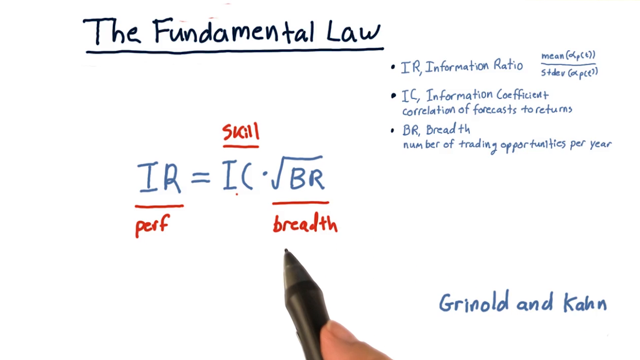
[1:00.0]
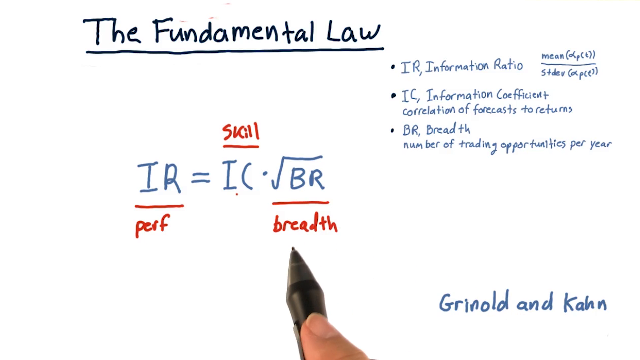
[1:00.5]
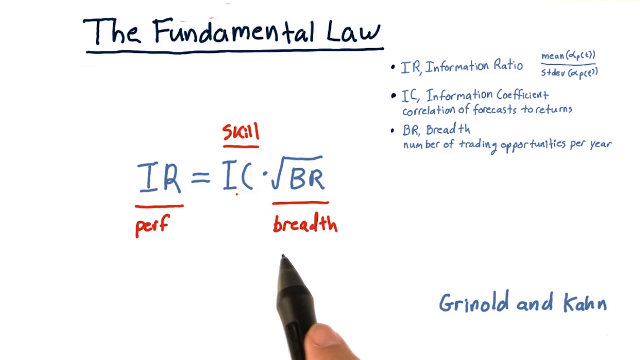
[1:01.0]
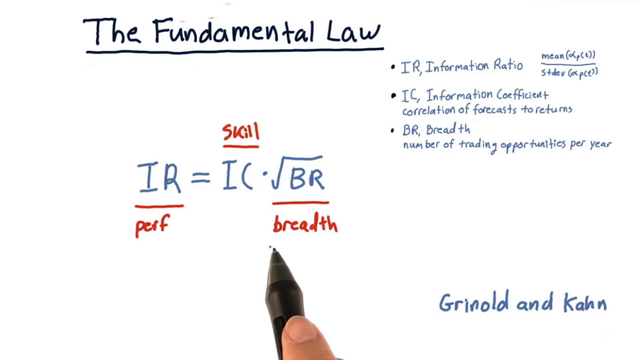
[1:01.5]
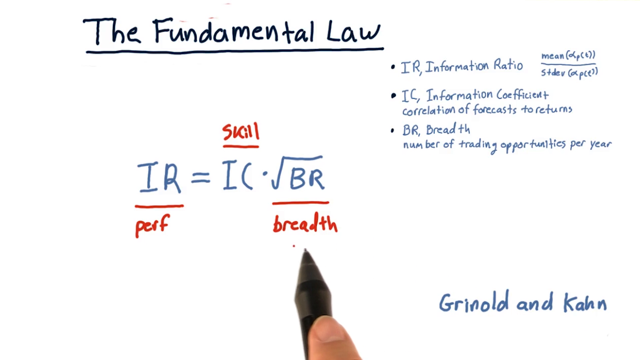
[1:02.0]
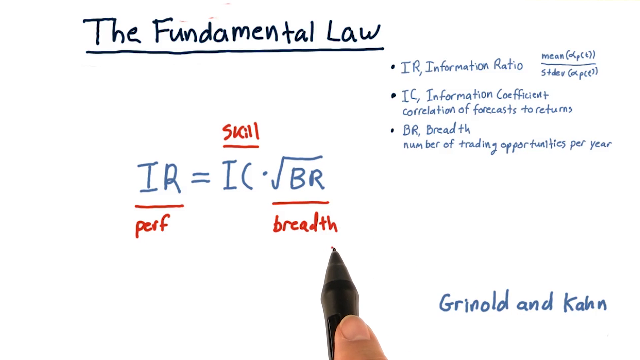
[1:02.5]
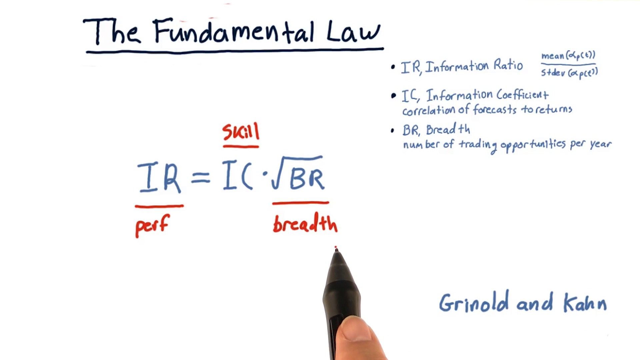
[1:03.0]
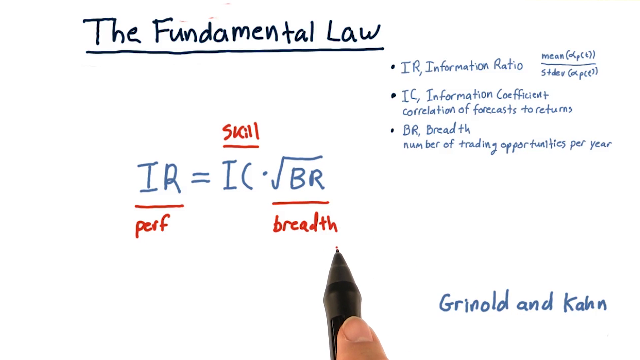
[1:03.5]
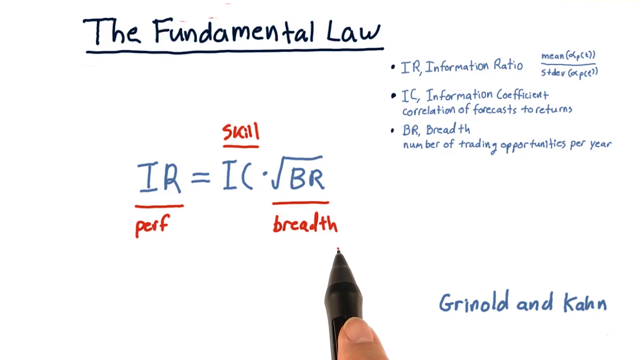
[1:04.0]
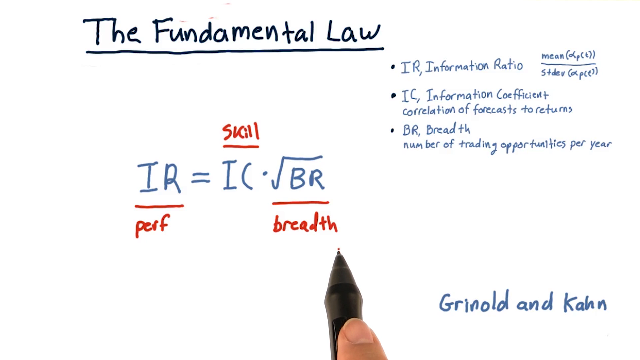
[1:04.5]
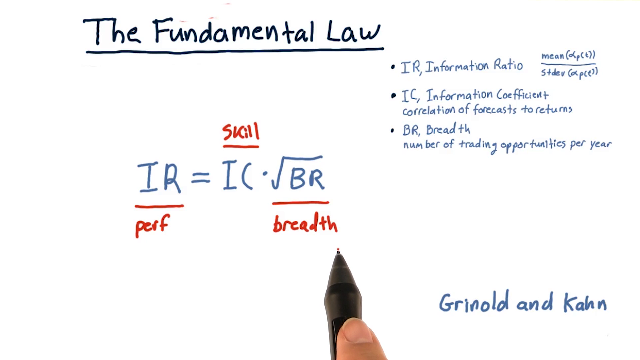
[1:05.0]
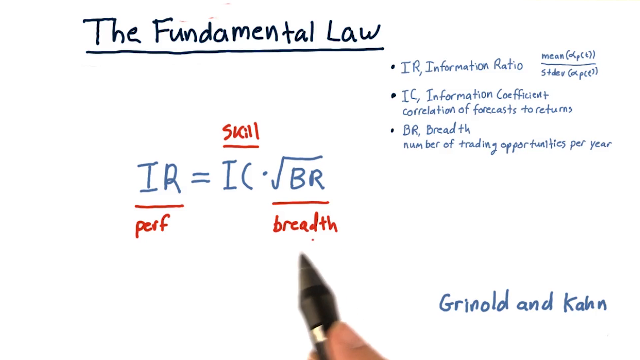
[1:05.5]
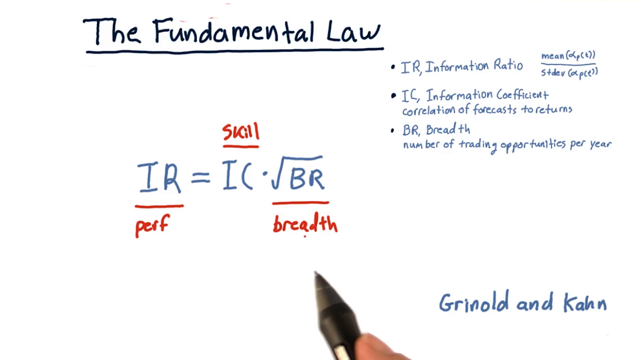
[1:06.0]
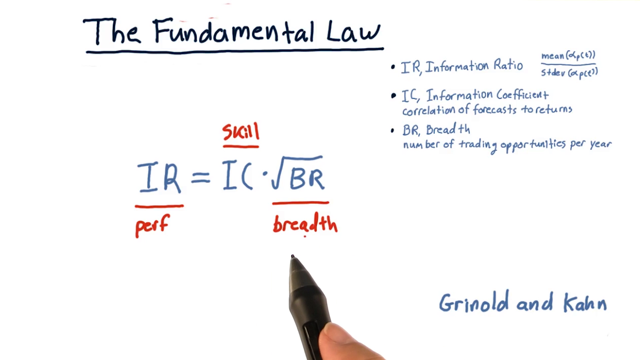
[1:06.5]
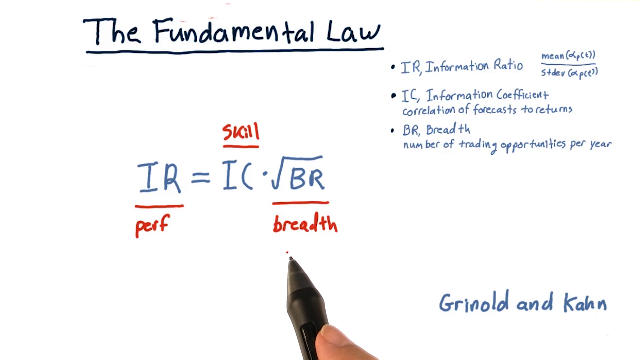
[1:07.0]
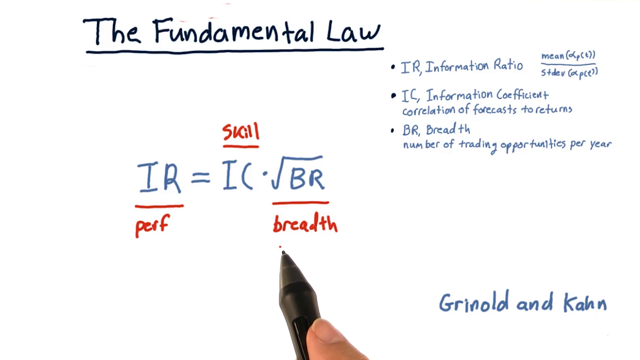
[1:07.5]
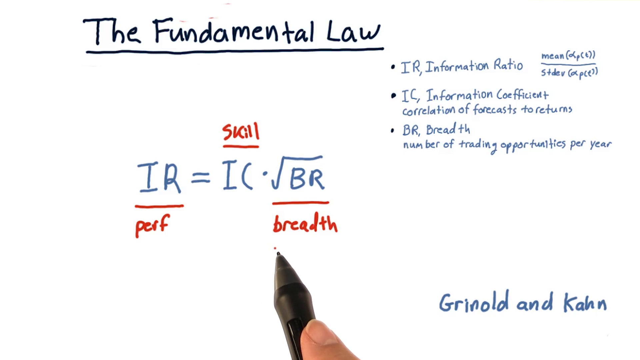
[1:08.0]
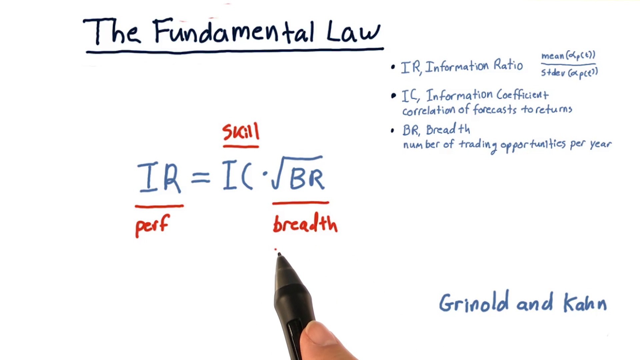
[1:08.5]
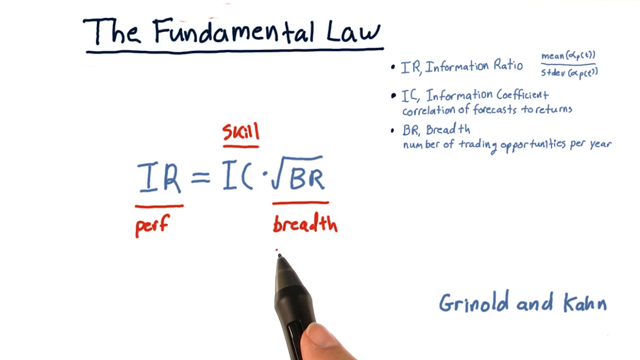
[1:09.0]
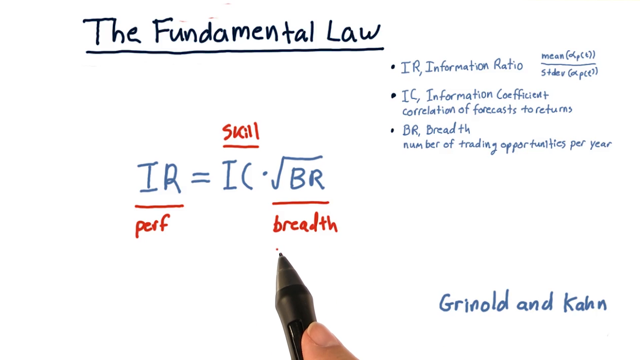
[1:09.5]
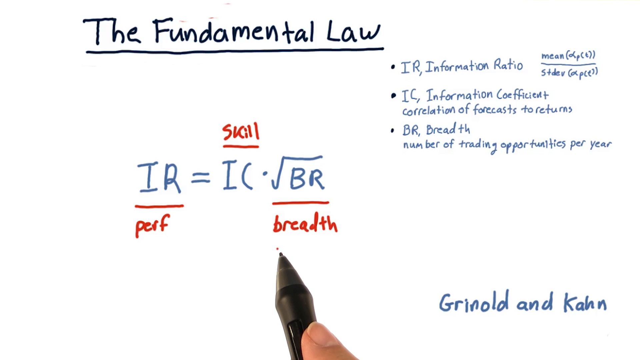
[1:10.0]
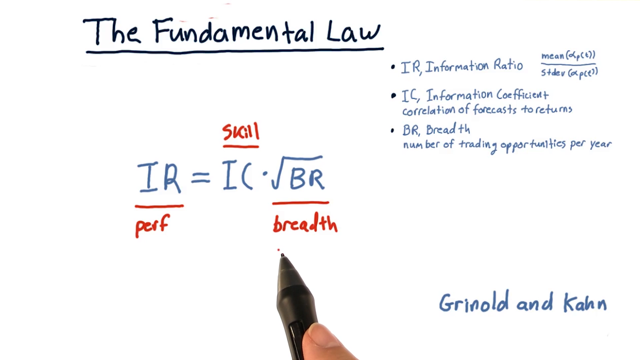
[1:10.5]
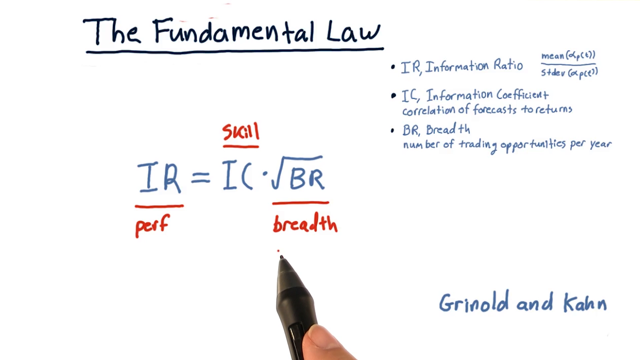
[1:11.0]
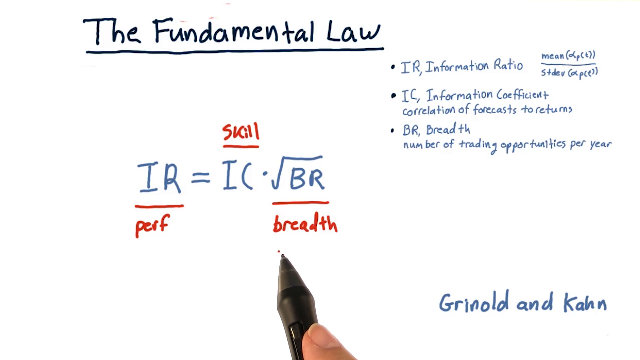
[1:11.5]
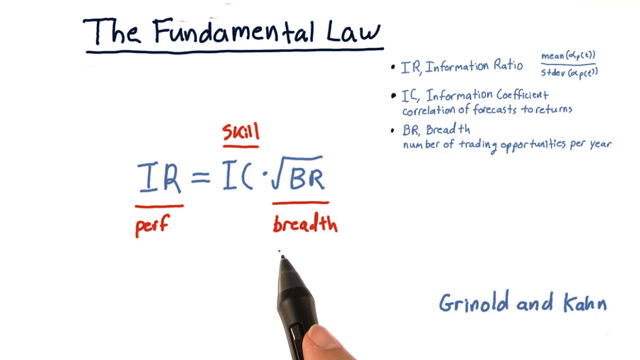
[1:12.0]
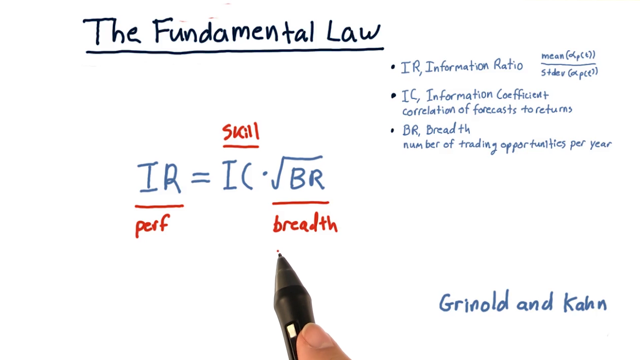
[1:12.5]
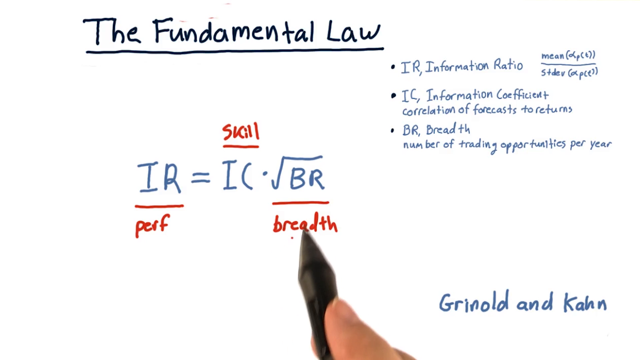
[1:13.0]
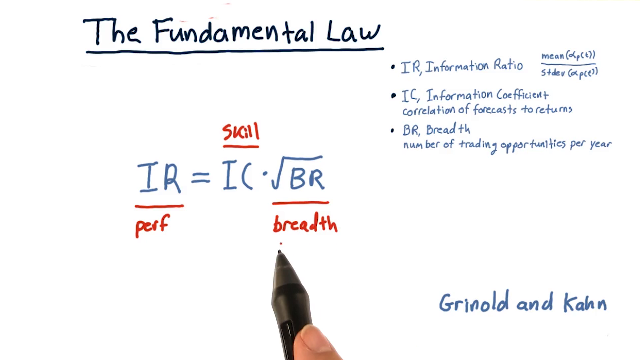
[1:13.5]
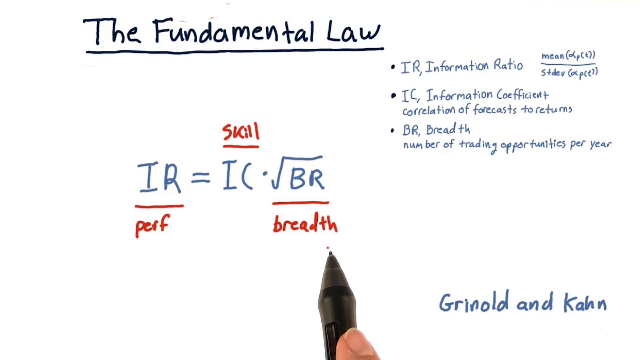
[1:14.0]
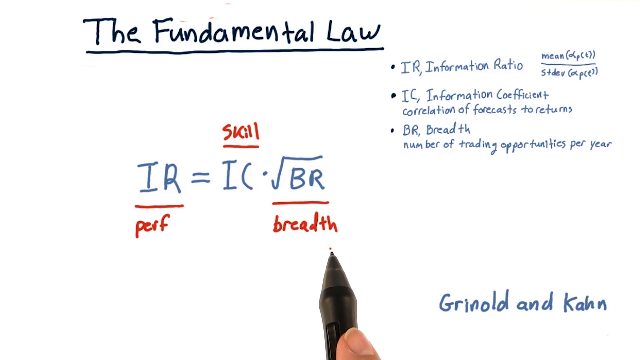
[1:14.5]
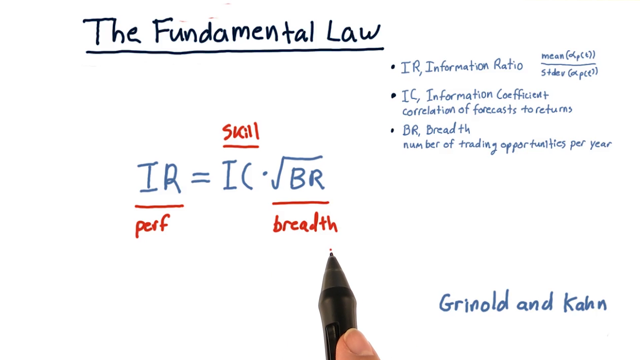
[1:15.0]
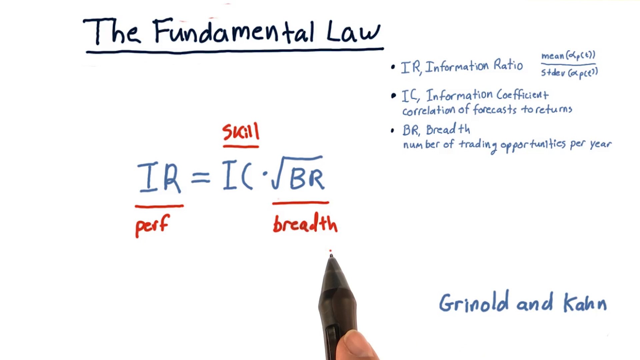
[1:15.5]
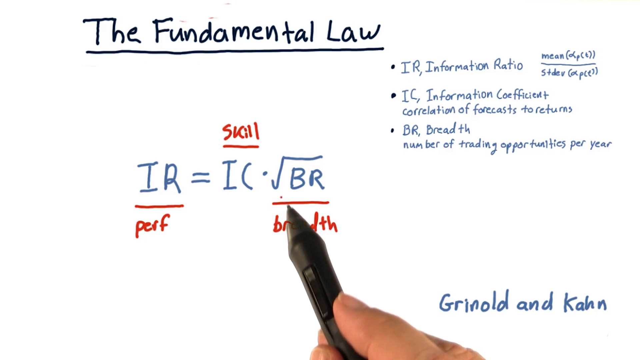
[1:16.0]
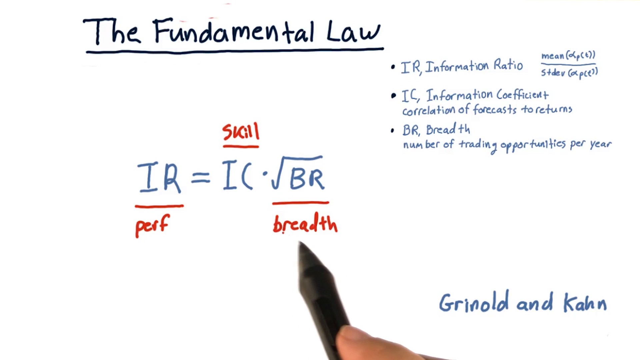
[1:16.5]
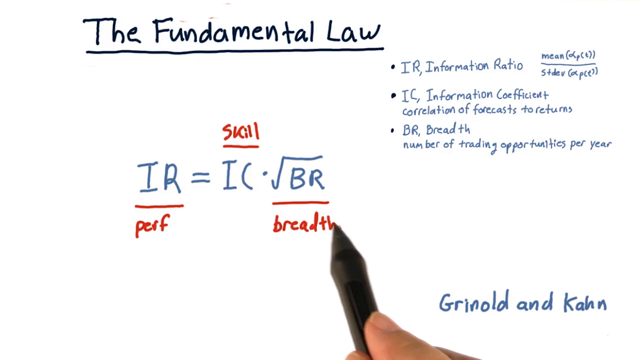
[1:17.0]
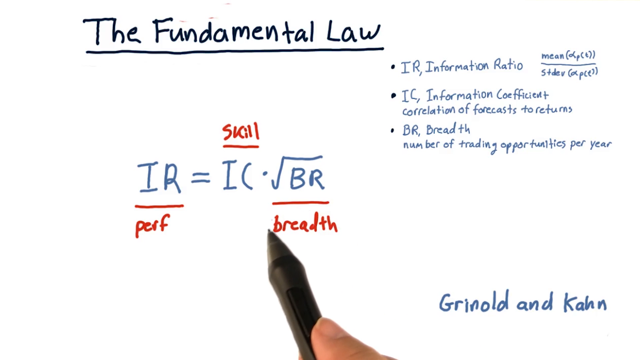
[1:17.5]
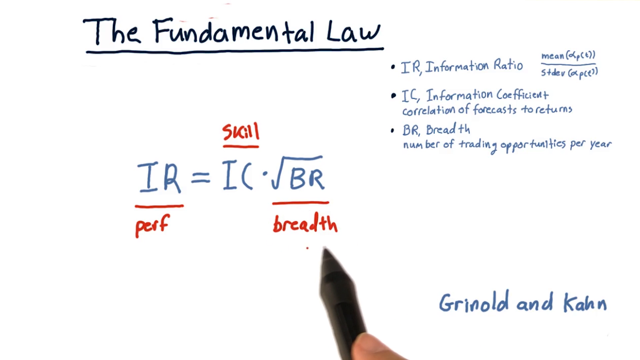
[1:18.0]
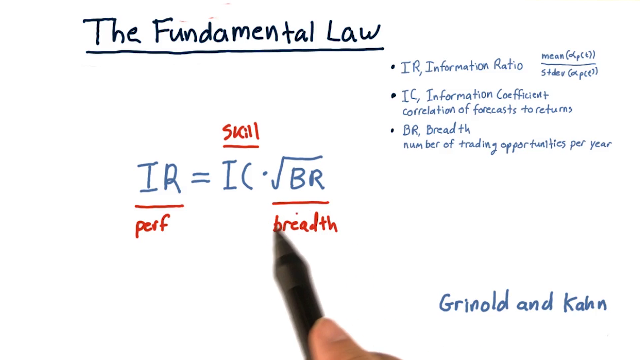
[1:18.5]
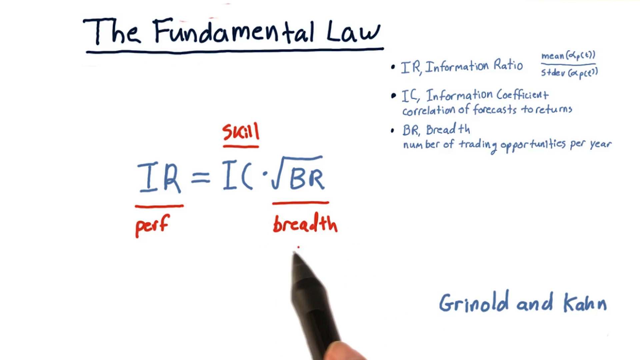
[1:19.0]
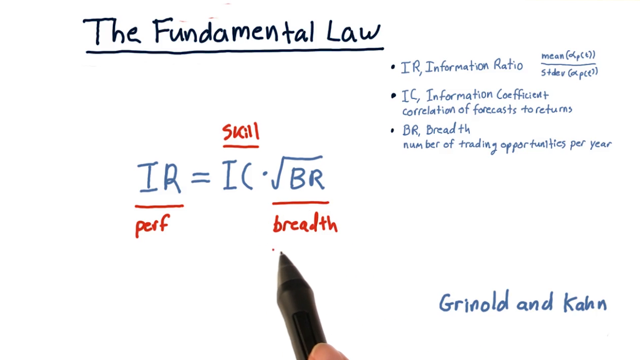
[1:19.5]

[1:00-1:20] The handwritten formula continues, and some of the information is written in red pen.